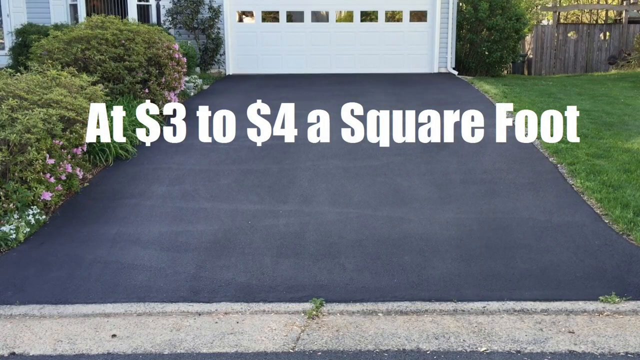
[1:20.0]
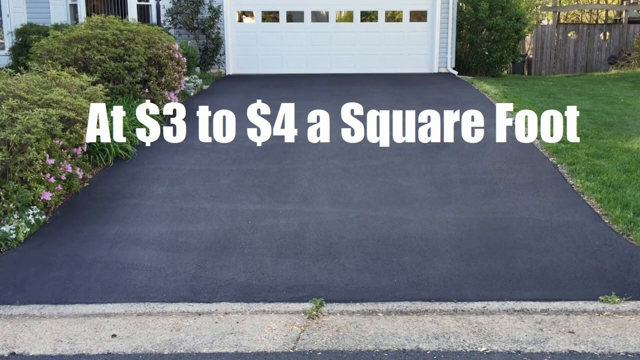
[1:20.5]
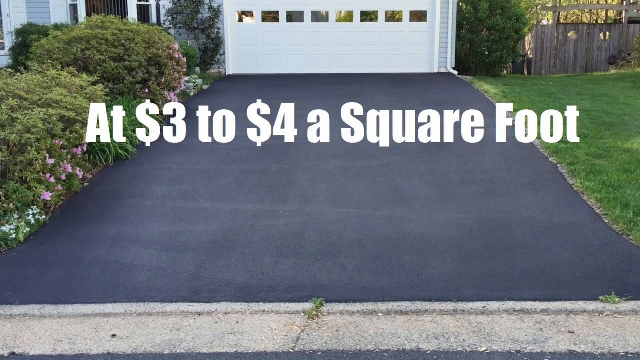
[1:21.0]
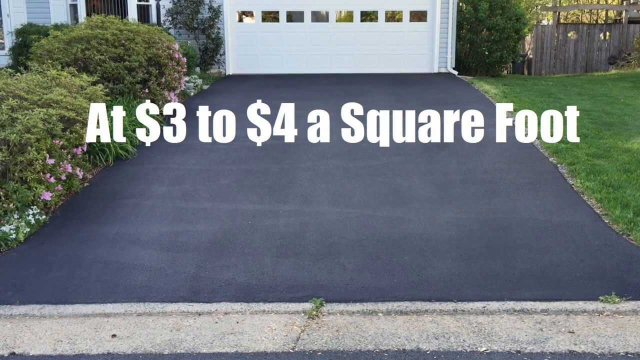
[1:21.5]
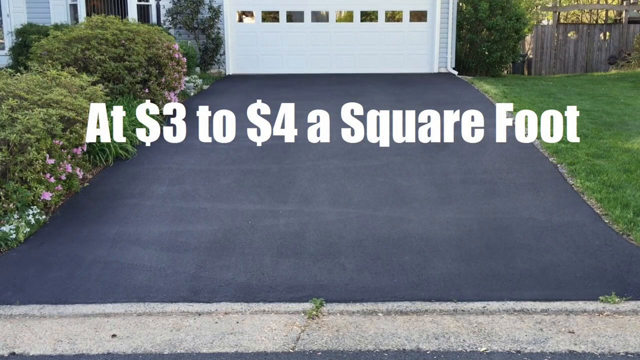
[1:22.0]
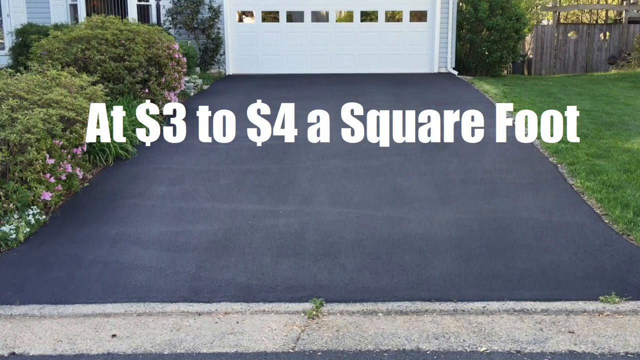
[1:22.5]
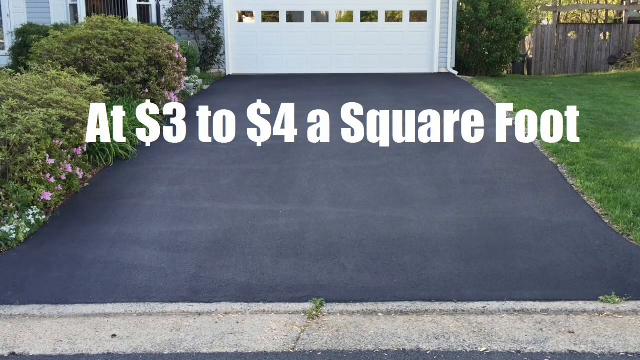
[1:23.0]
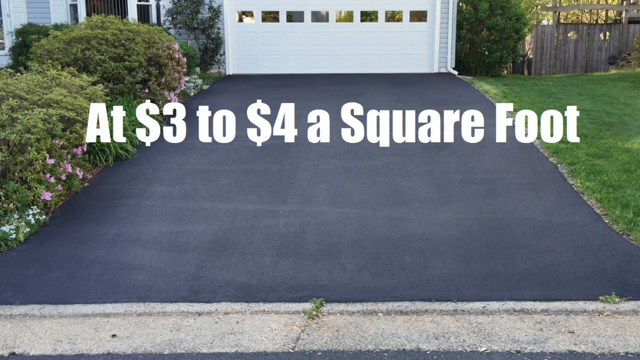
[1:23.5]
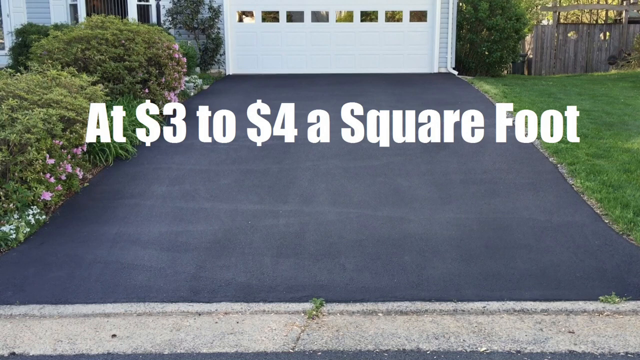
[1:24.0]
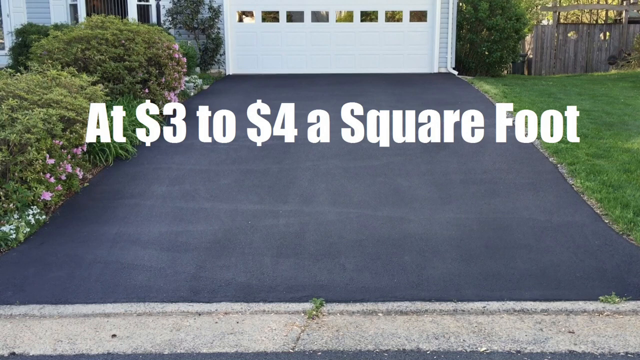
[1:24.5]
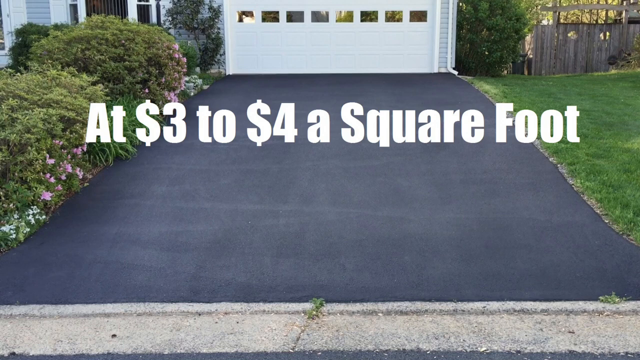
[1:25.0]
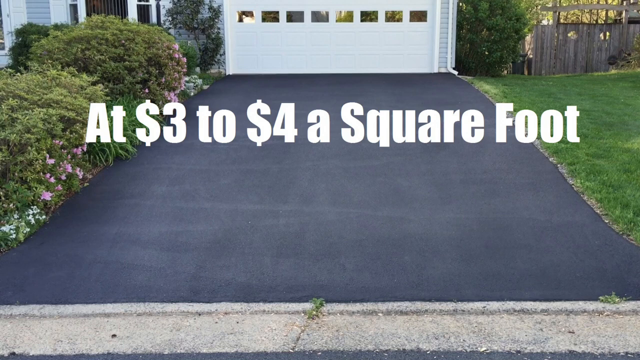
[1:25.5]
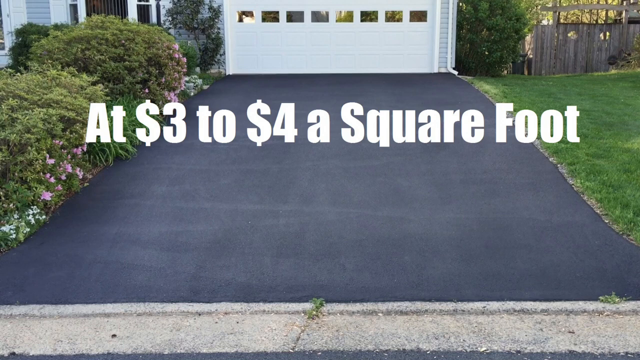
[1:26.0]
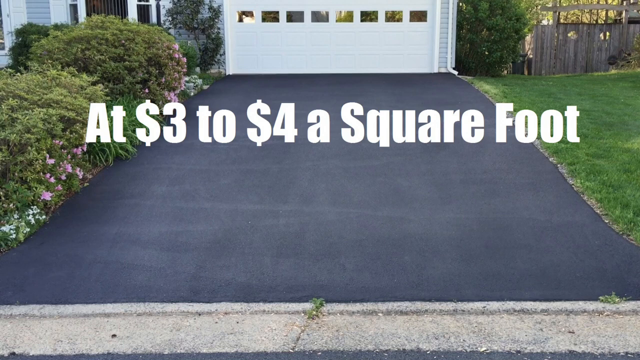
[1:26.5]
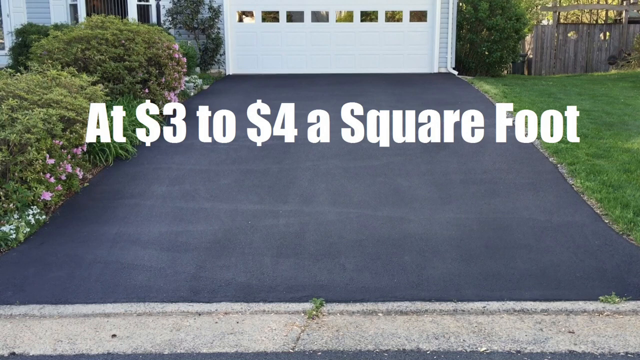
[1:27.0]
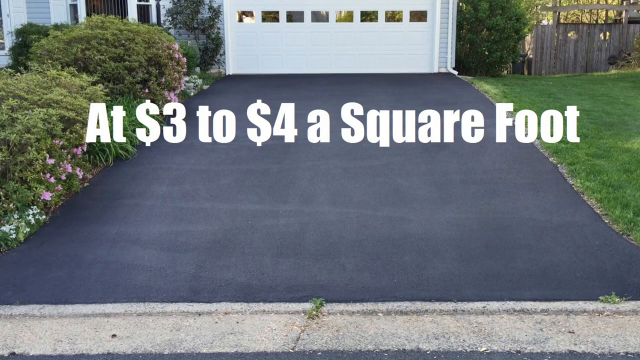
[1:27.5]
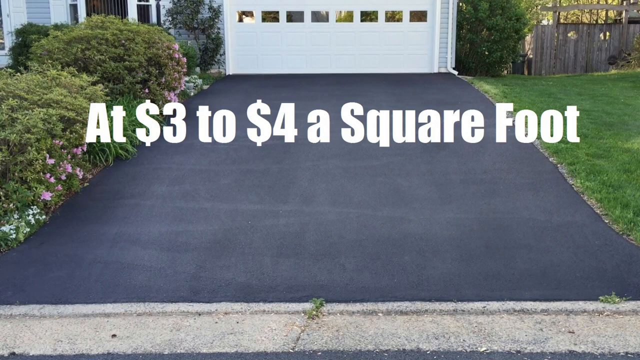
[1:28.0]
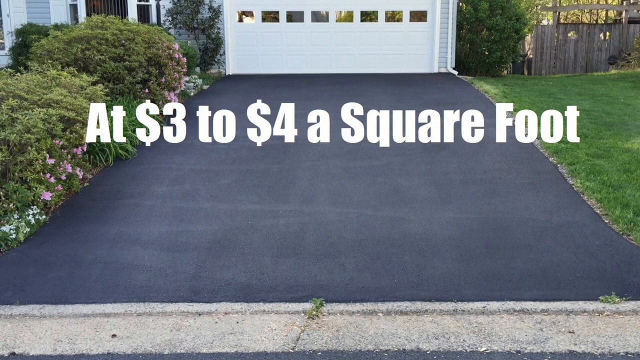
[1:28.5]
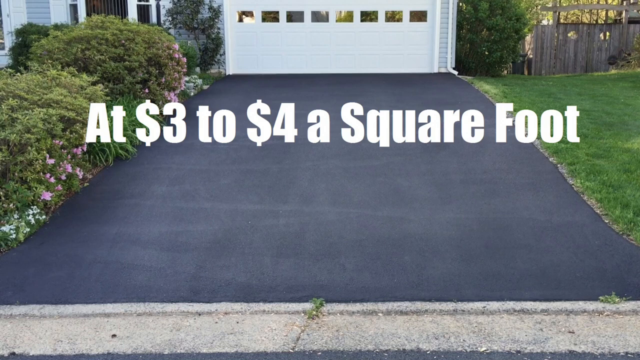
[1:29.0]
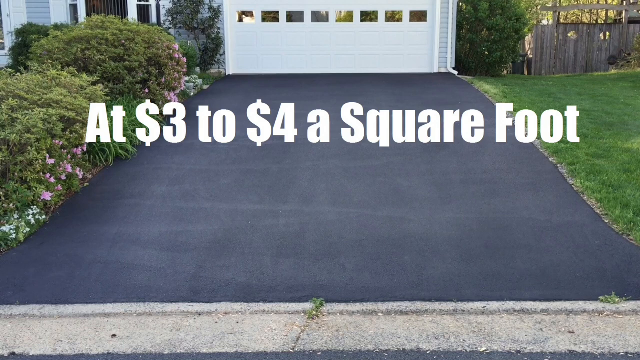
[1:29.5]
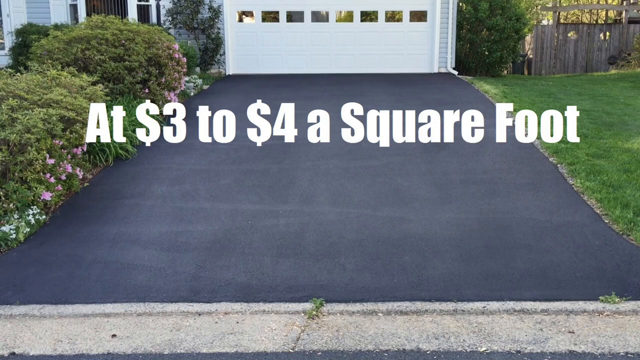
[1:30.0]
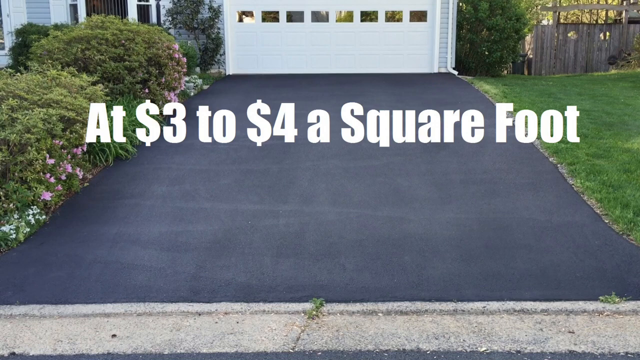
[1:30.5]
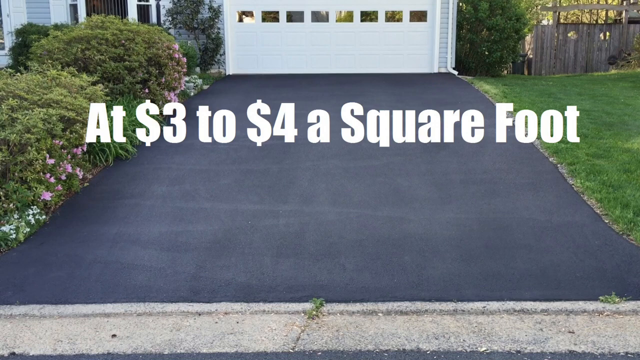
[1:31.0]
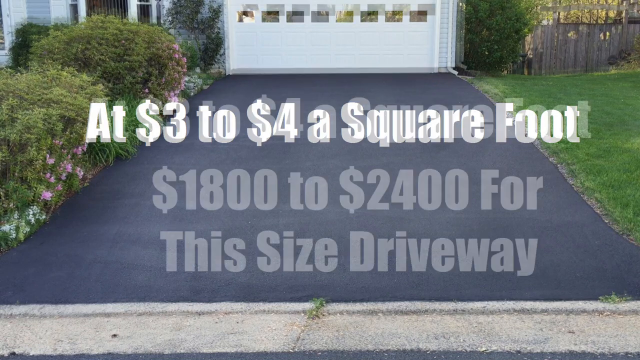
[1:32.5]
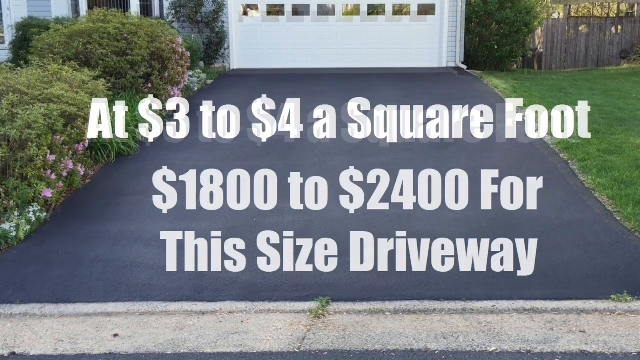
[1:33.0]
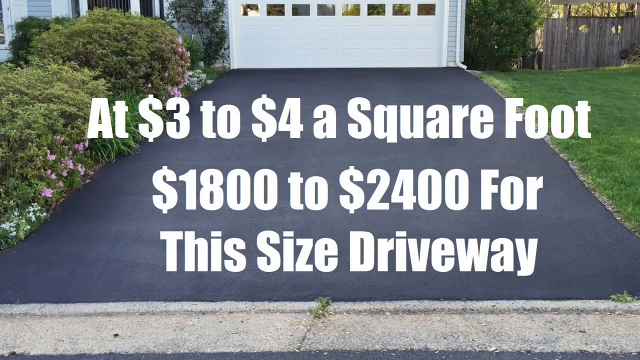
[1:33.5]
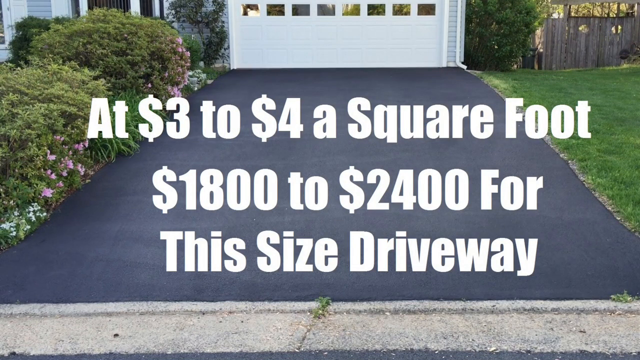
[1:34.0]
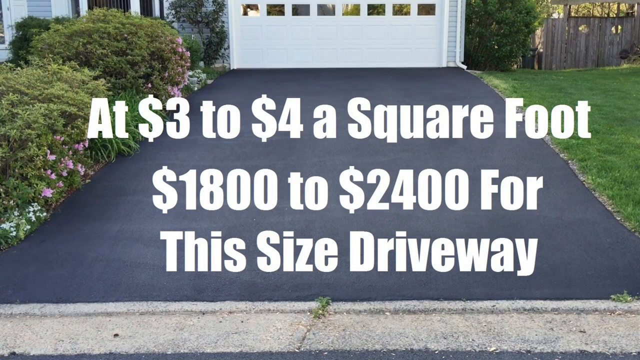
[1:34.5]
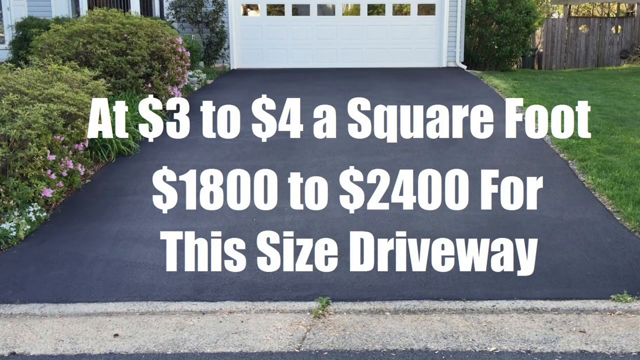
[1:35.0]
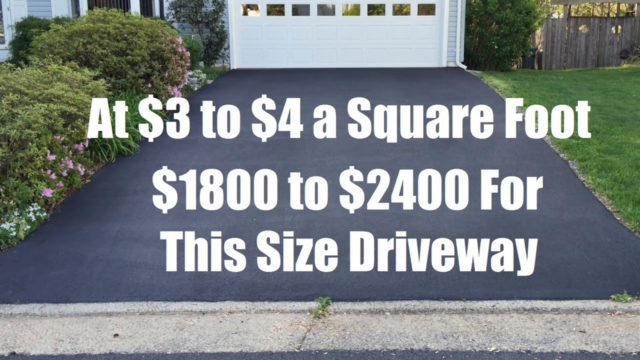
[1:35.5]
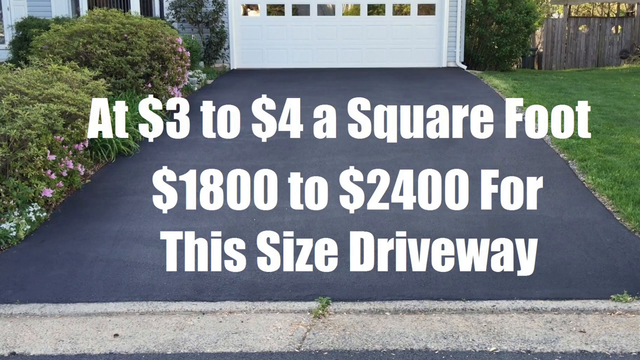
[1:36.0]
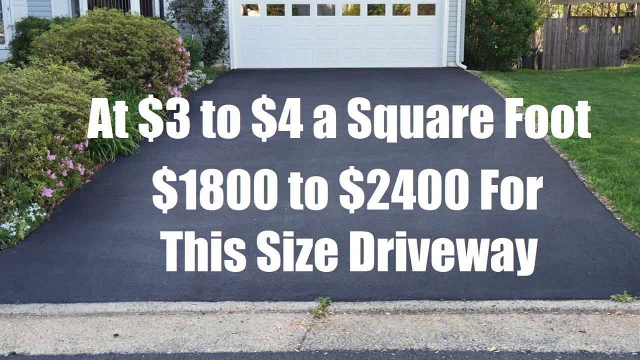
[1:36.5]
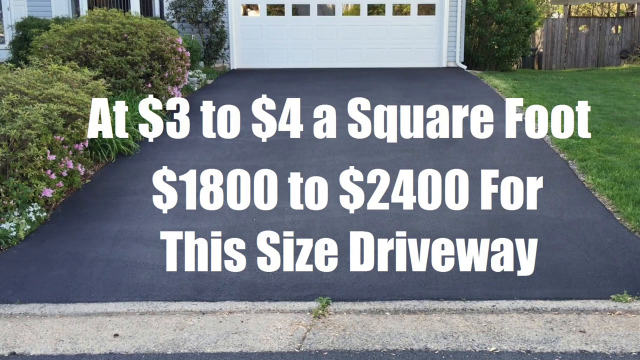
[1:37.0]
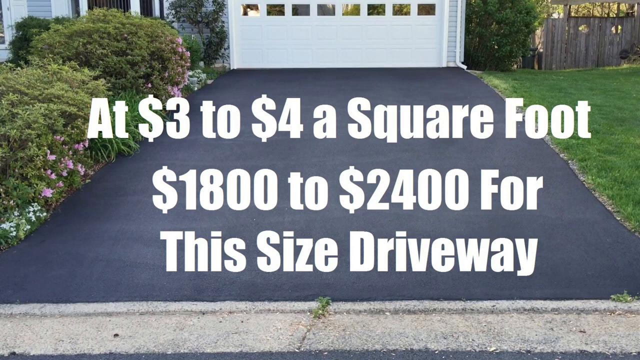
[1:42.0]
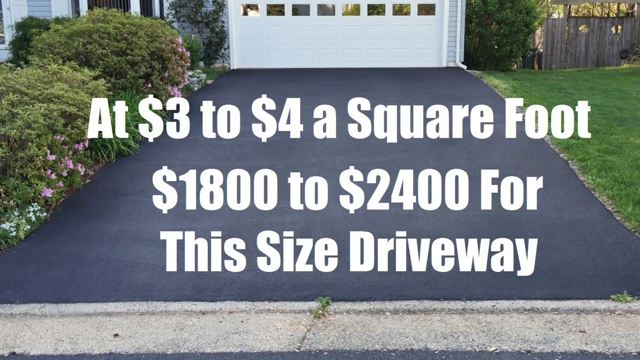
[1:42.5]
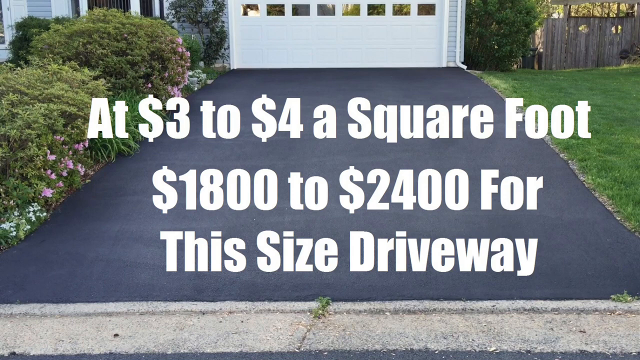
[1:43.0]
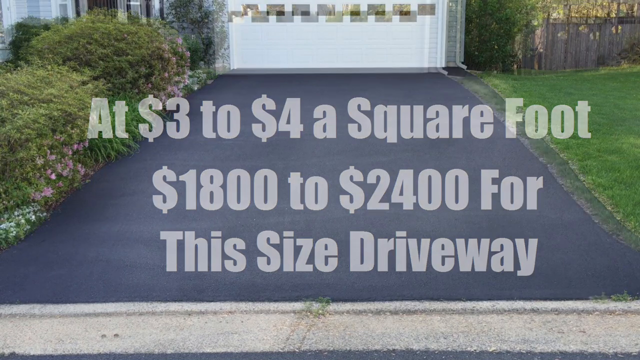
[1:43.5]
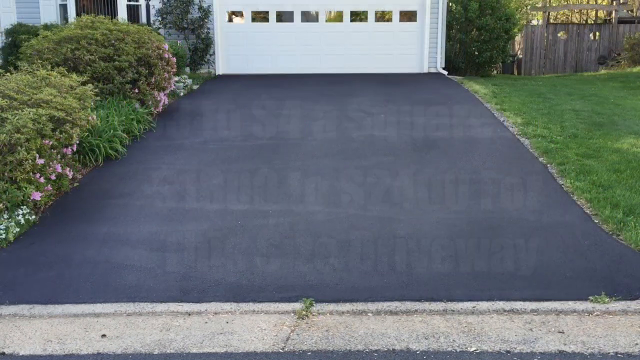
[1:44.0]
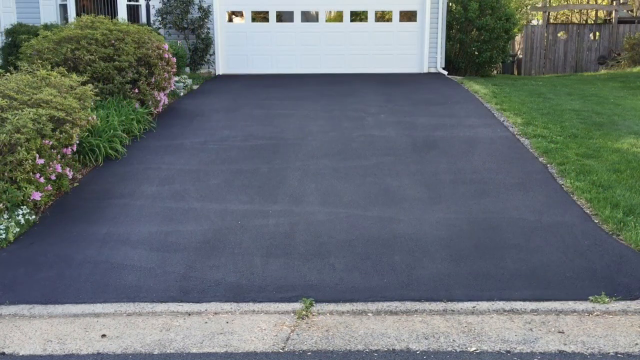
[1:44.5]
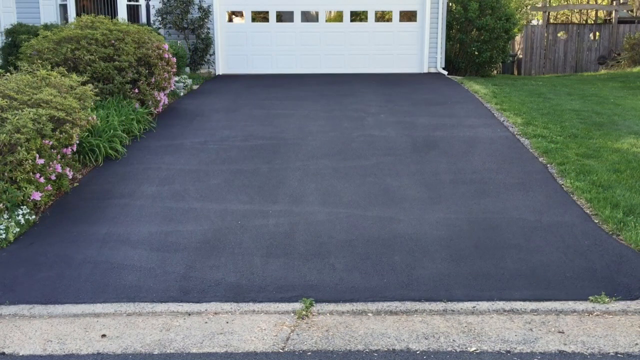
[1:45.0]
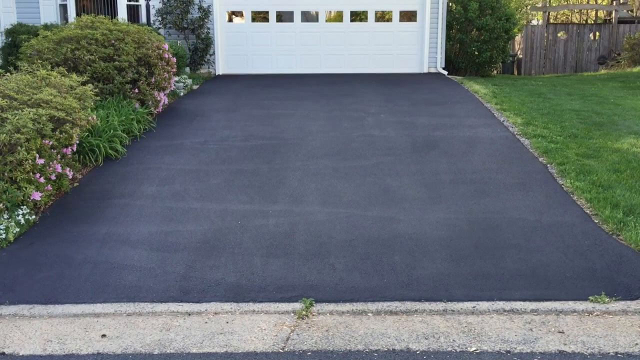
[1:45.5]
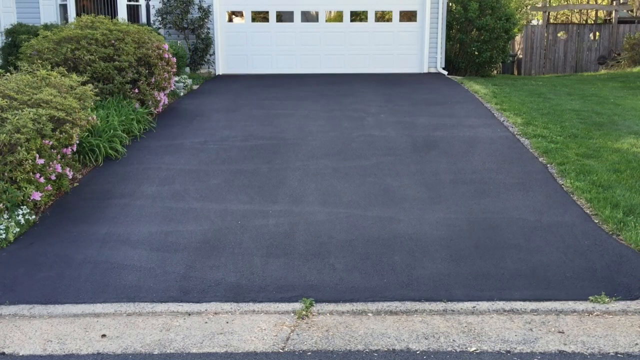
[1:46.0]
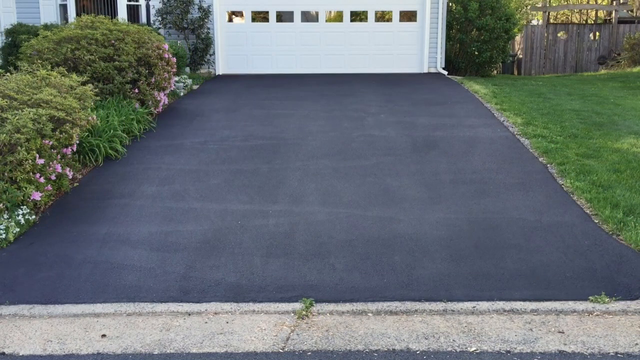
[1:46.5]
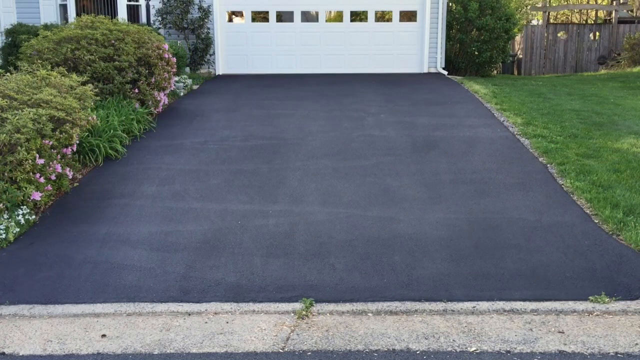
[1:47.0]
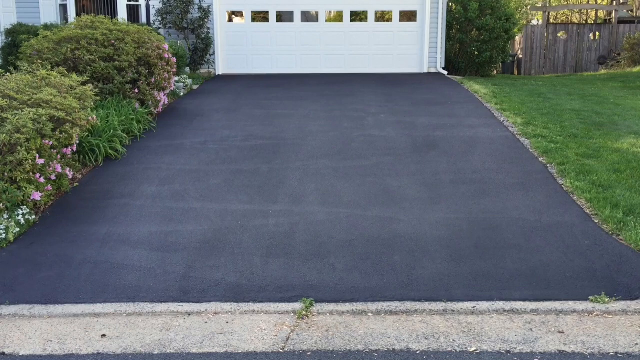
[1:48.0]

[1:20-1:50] An old road is shown with a white double-storey house on the hill, and the yard of the house is being fixed. One yard has paving without tar, another house has brick paving, and another has grass mixed with paving. A blue four-by-four car is there, along with a garage. Two arrows appear on screen, 20 feet one way and 30 feet the other, giving 600 square feet, with a price of three to four dollars per square foot. Pink flowers are in the garden. Figures from one thousand to two thousand four hundred are given, with the transformation costing two thousand four hundred.